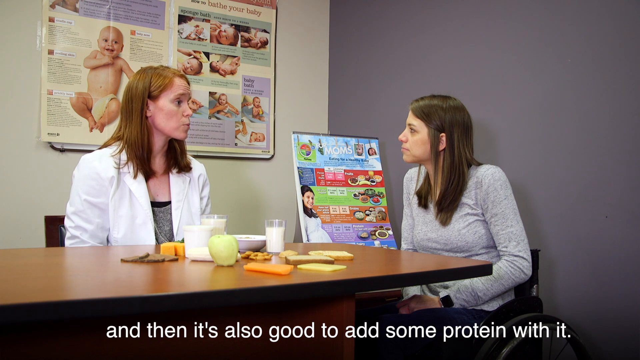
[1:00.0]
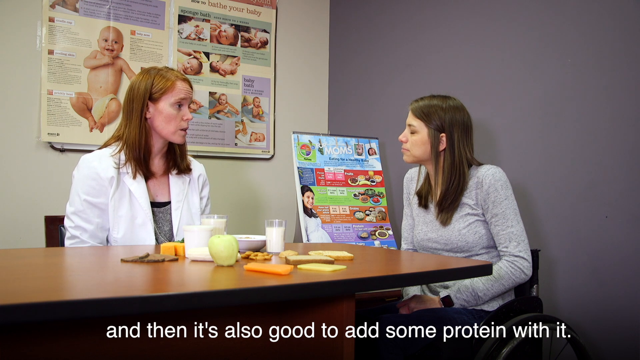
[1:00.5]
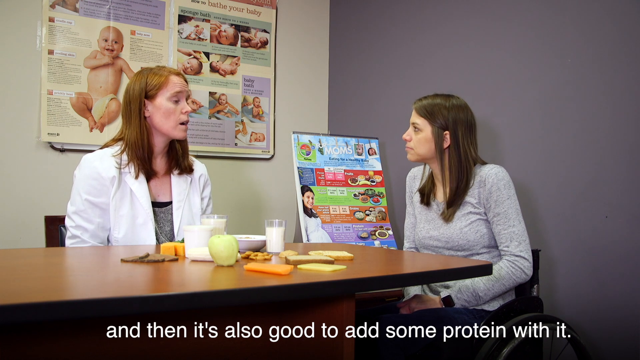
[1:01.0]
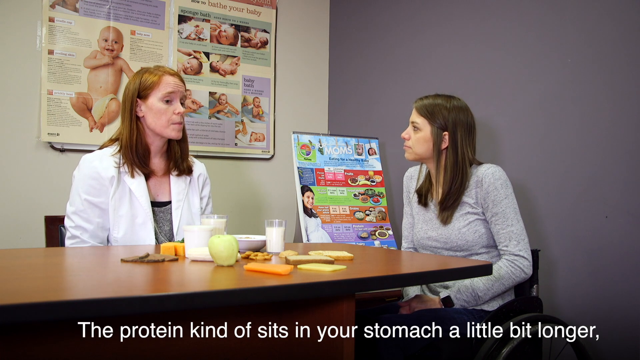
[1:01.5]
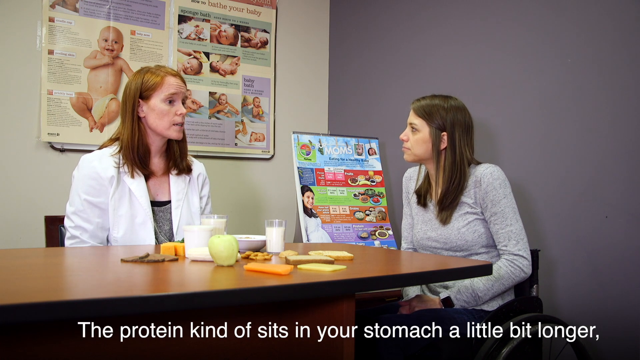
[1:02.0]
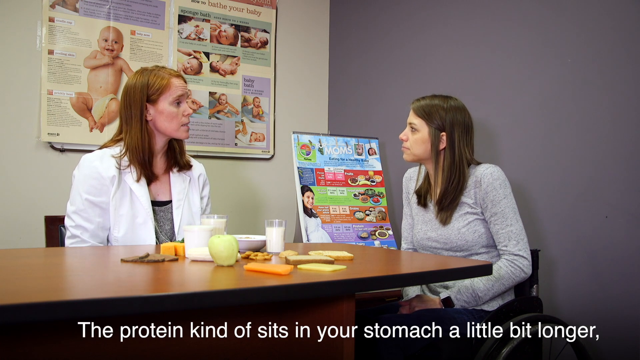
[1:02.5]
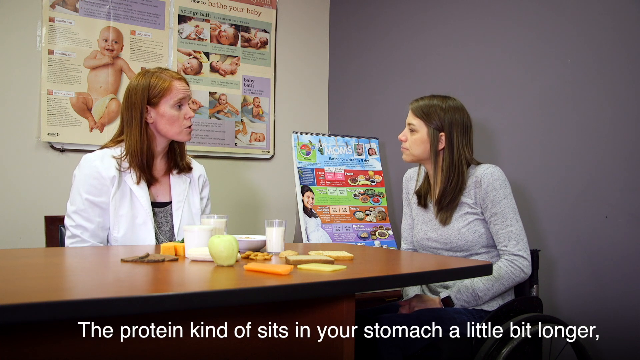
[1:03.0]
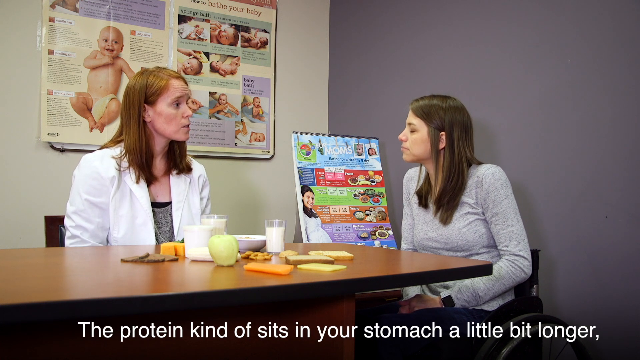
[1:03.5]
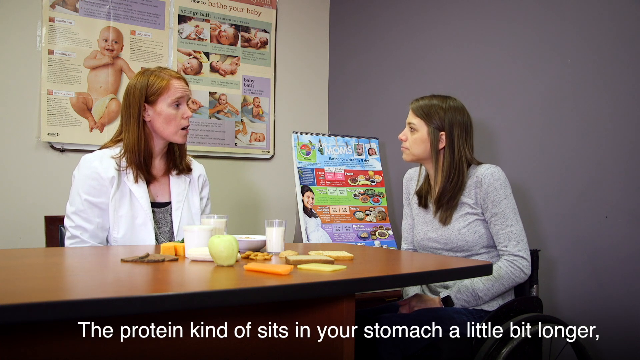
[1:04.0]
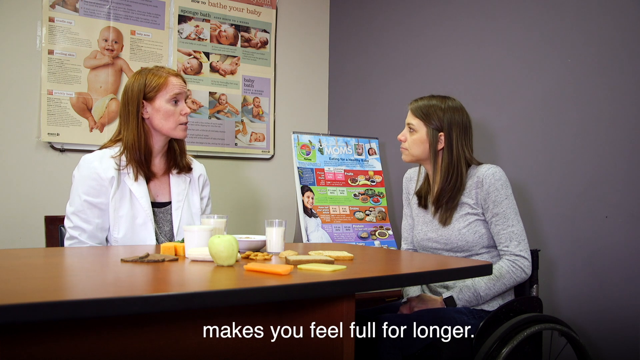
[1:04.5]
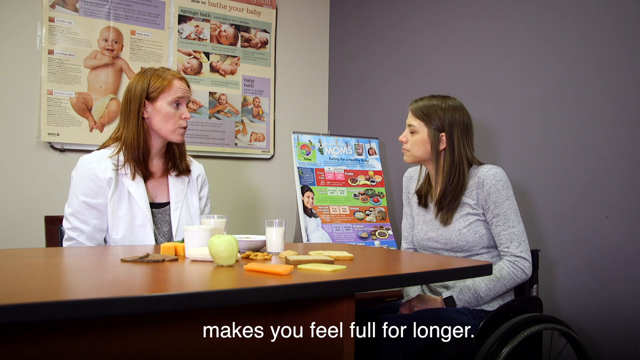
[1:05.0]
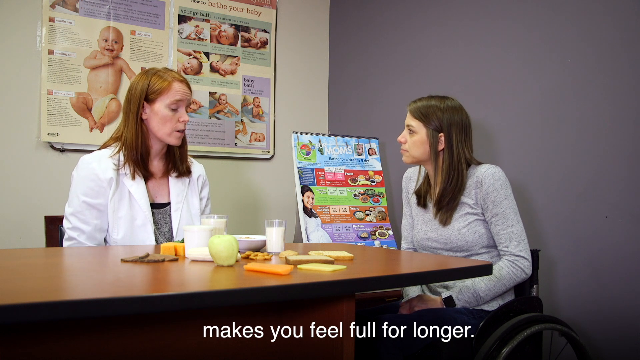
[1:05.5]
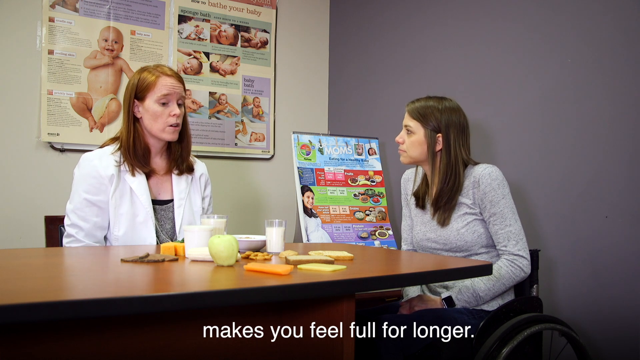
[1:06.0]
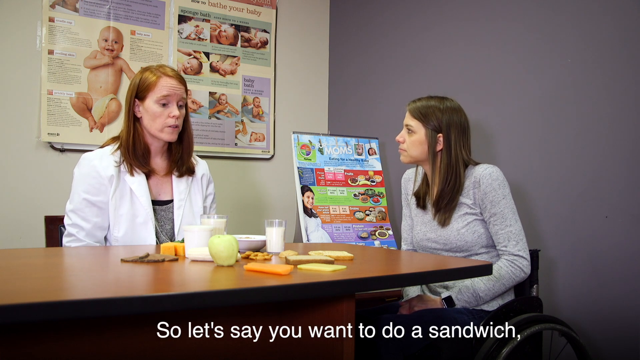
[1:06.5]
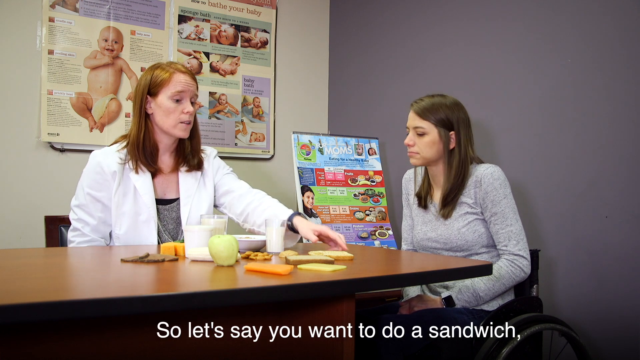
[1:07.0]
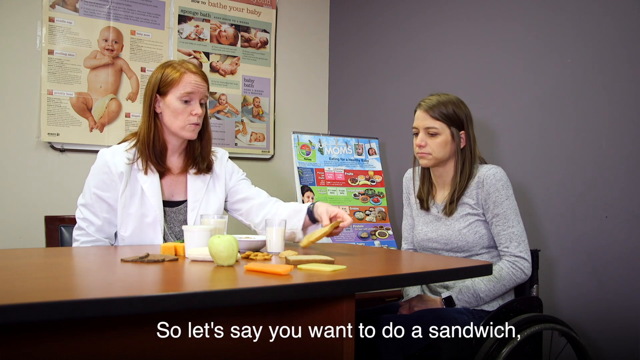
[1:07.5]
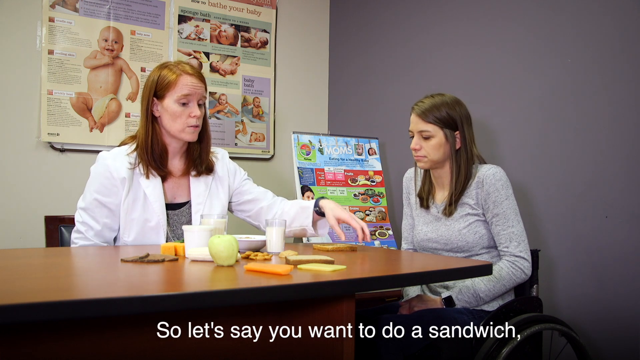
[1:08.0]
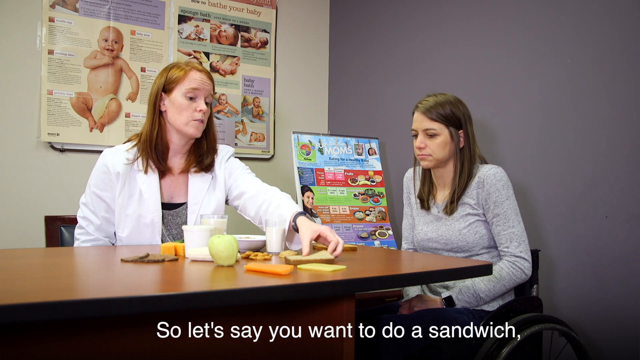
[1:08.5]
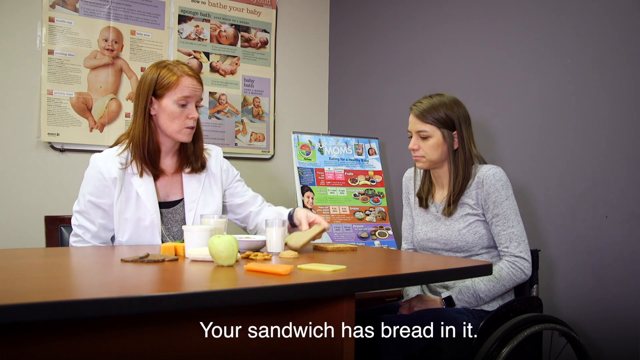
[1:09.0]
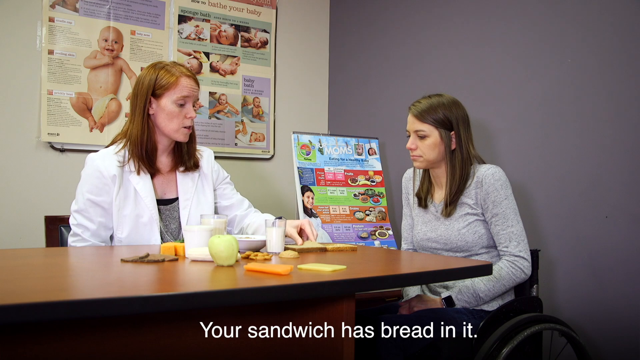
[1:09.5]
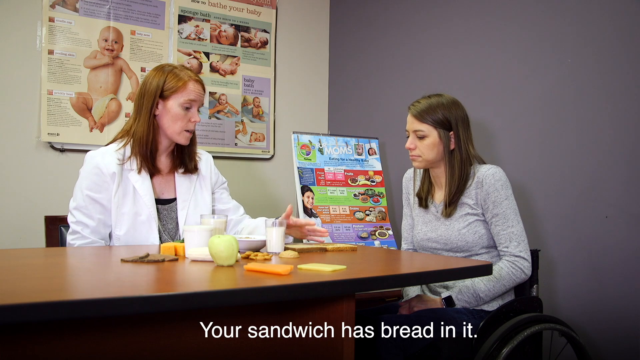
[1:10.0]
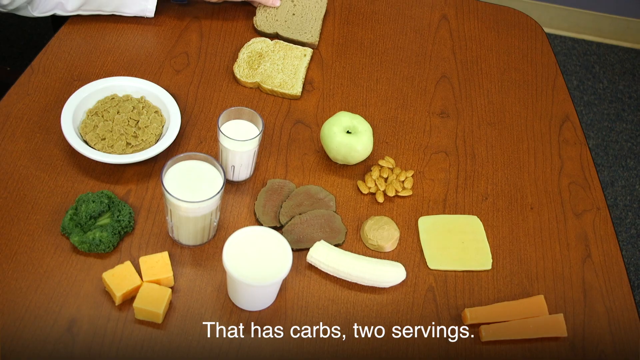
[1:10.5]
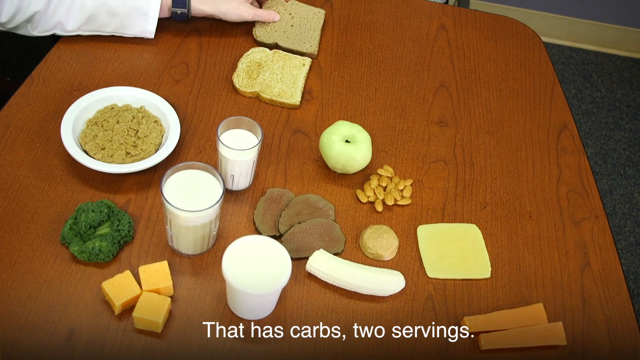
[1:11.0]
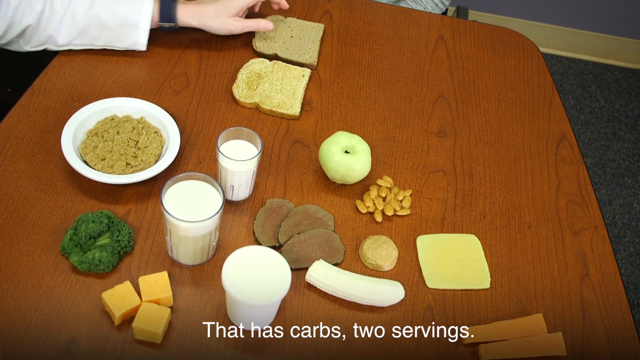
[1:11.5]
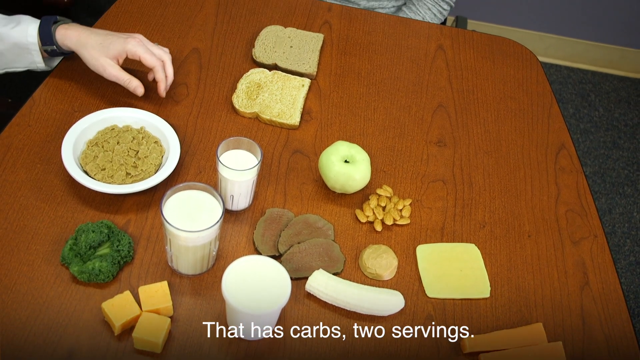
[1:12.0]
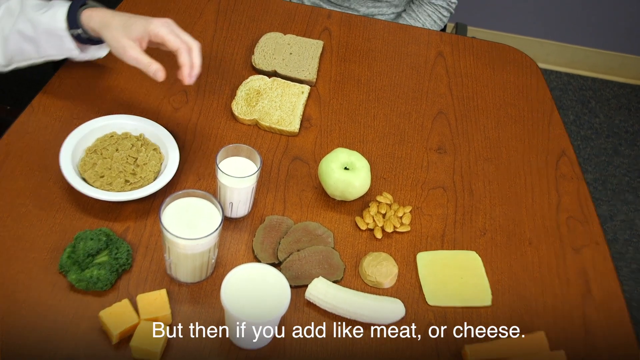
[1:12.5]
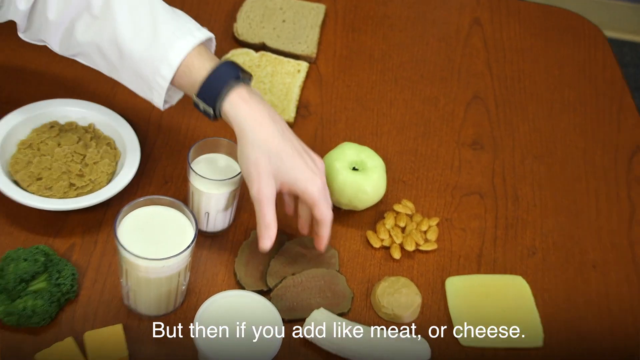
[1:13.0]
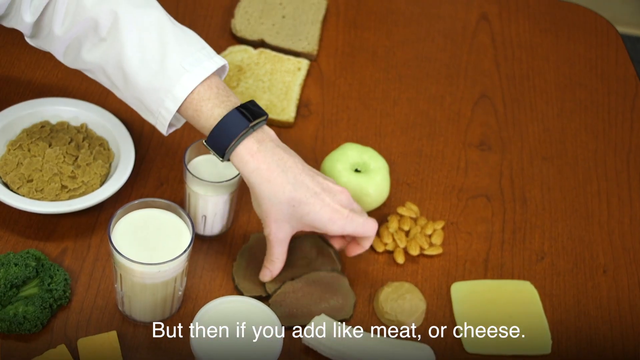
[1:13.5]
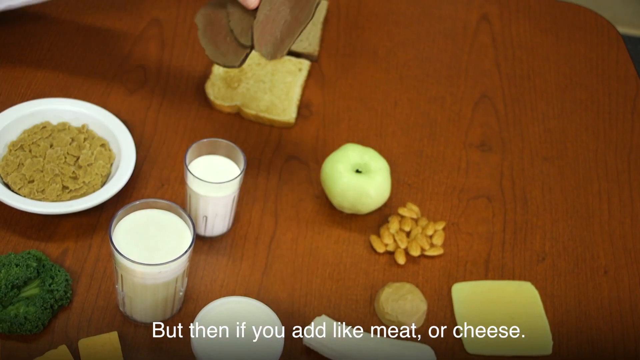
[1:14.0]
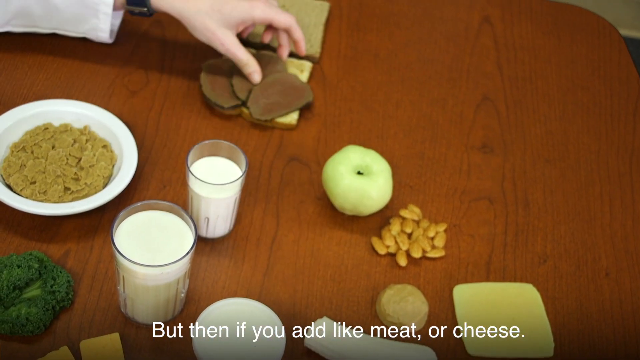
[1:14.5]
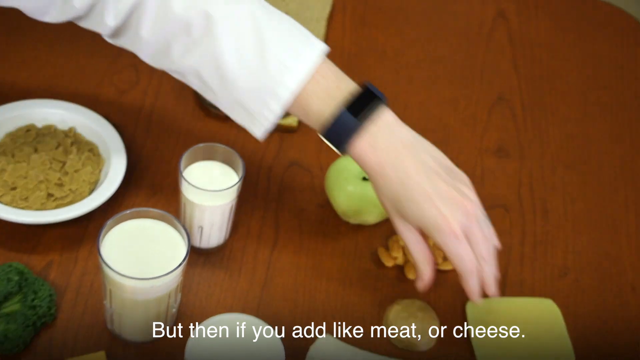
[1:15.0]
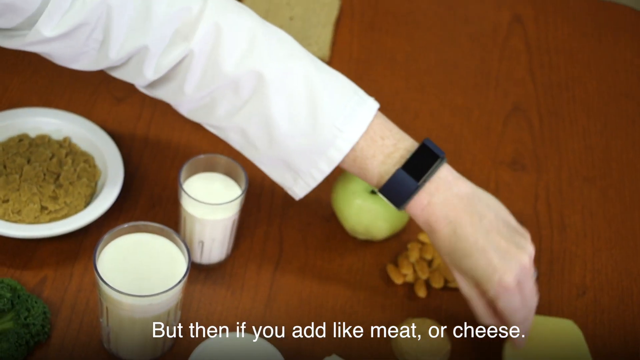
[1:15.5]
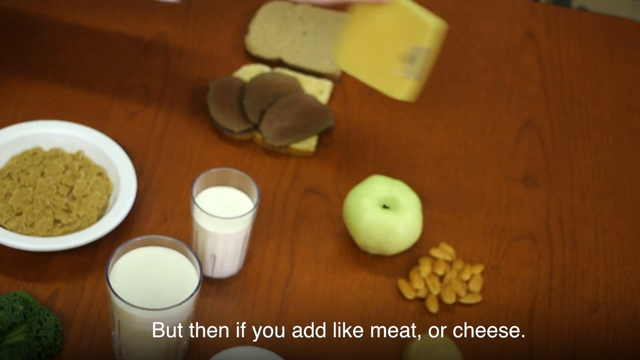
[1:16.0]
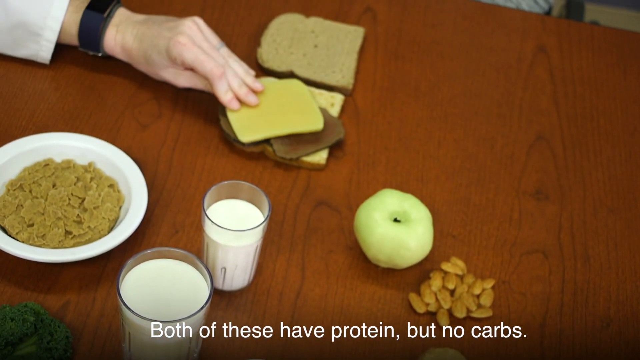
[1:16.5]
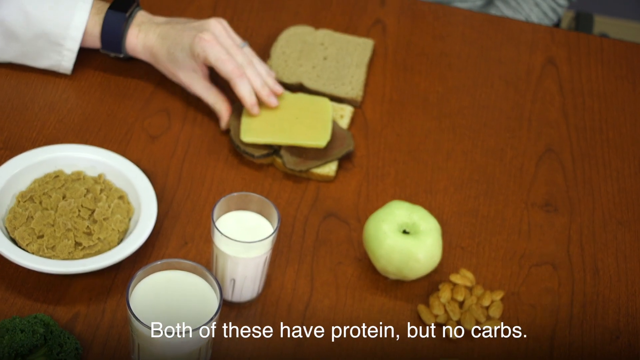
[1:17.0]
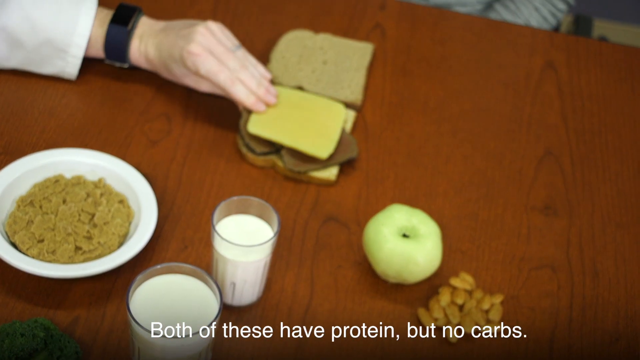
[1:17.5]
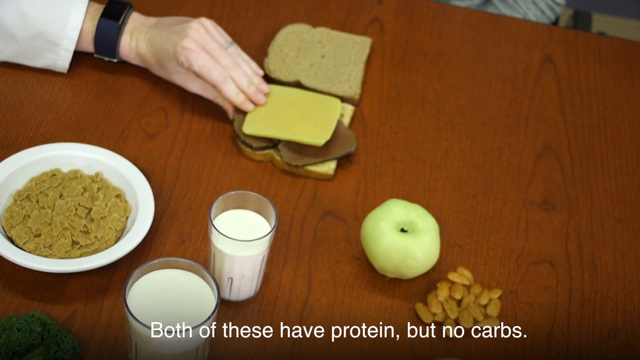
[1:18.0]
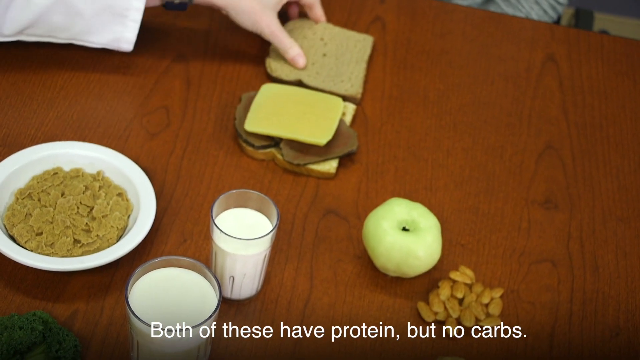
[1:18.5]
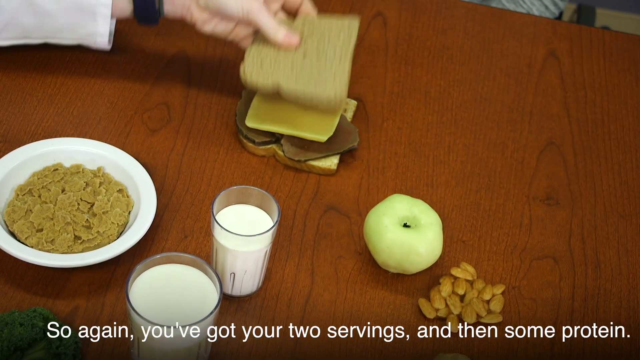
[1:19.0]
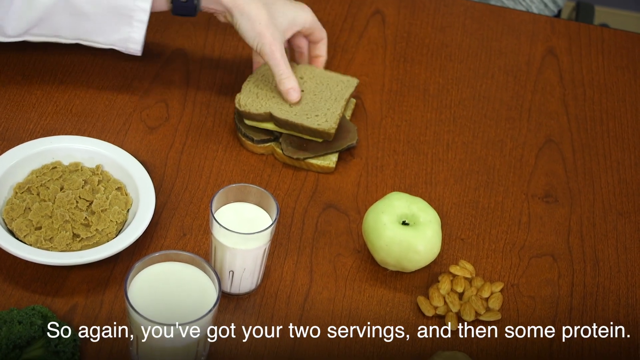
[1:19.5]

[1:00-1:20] The discussion between the doctor or nutritionist and the pregnant woman continues. They sit across from each other in a room with purple walls, and there appear to be some posters about baby health on the wall. The doctor says a piece of bread is one serving, that the label on a pack of crackers shows whether it is within 30 grams, that protein stays in the stomach longer and keeps you full longer, and gives the example of a sandwich with bread plus meat or cheese. The spread of food on the table appears to be fake or mock food used to illustrate her points.